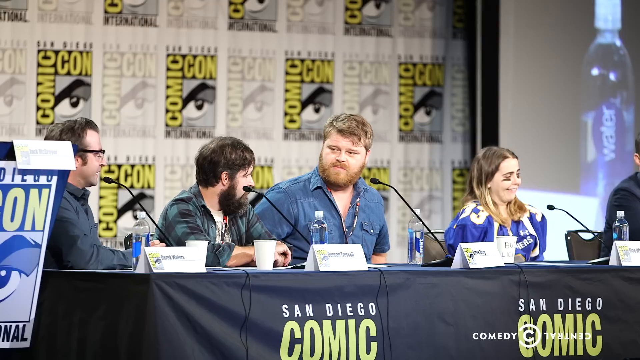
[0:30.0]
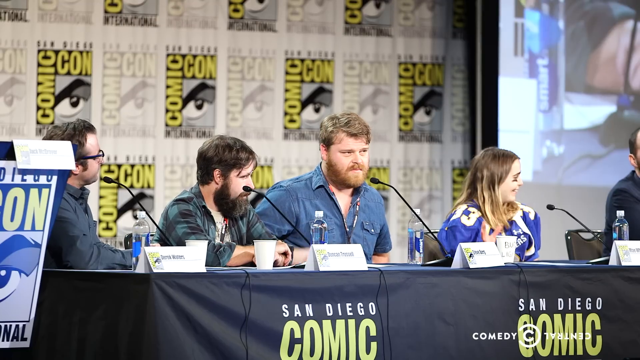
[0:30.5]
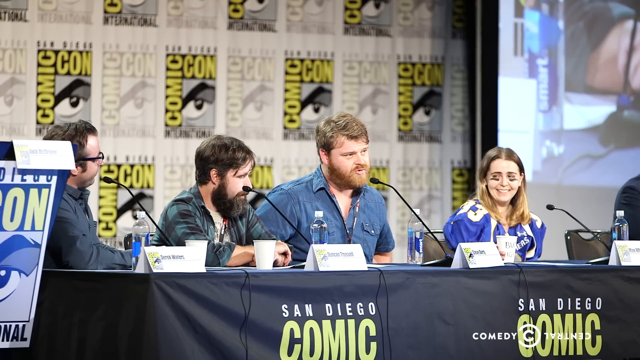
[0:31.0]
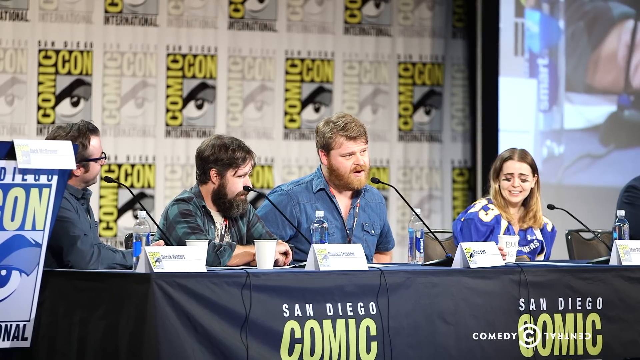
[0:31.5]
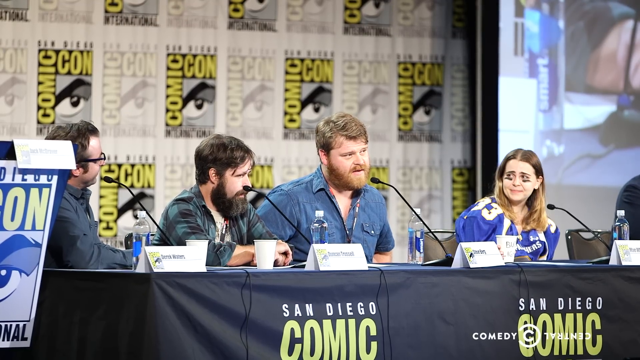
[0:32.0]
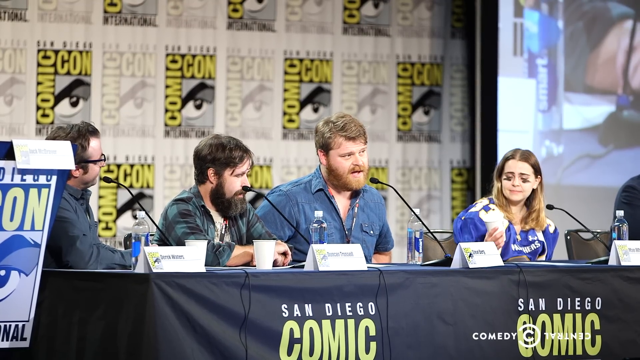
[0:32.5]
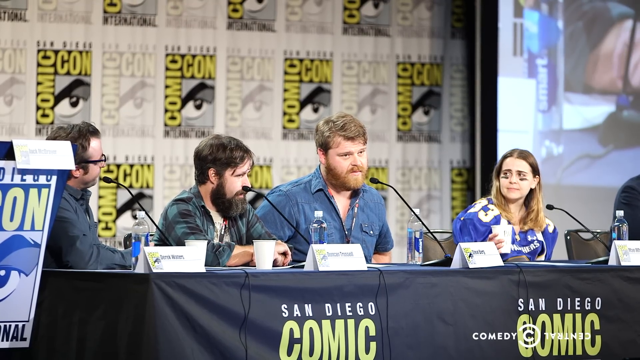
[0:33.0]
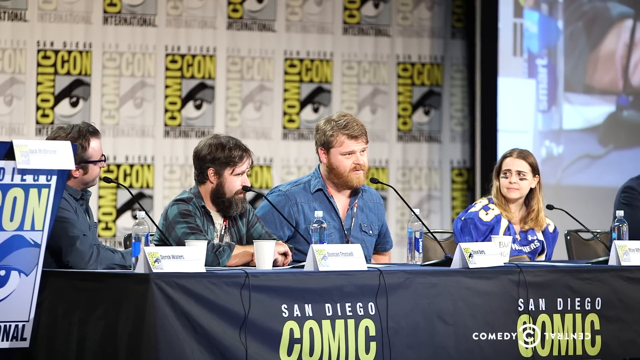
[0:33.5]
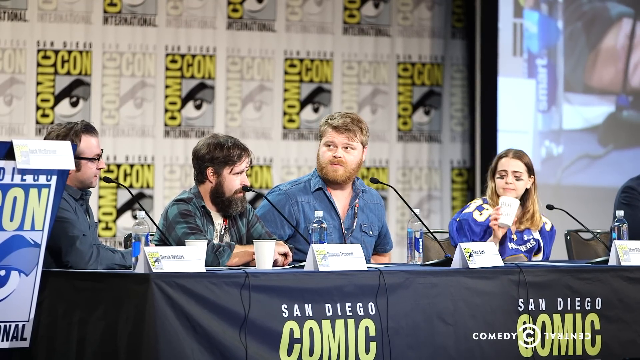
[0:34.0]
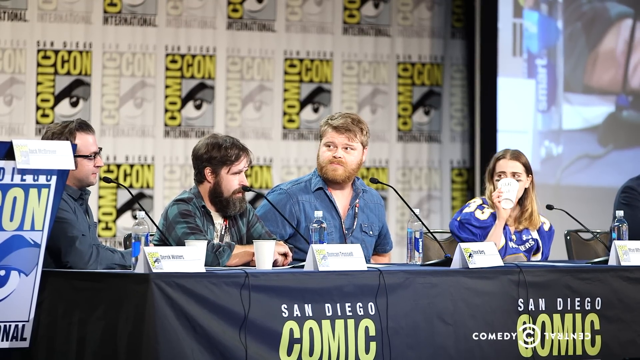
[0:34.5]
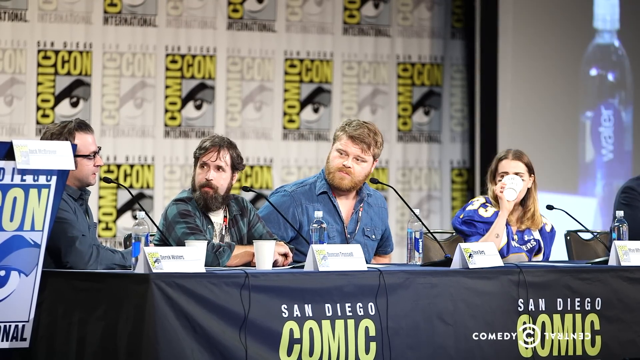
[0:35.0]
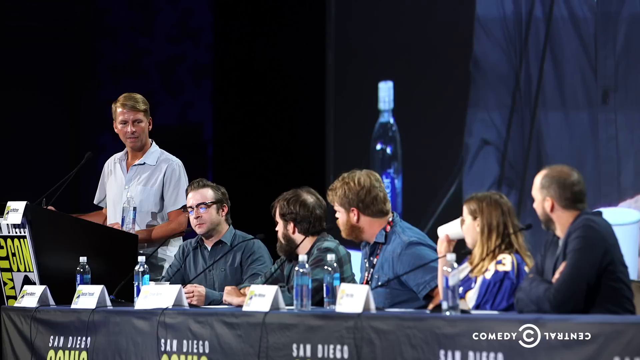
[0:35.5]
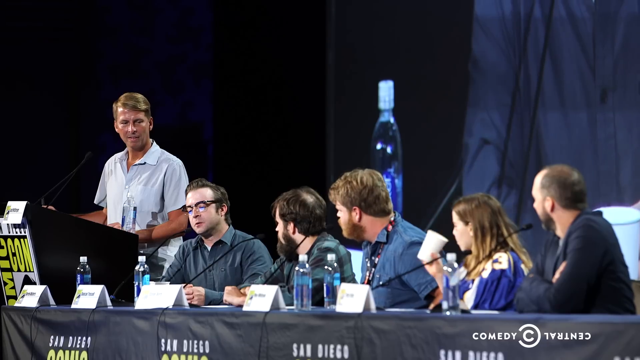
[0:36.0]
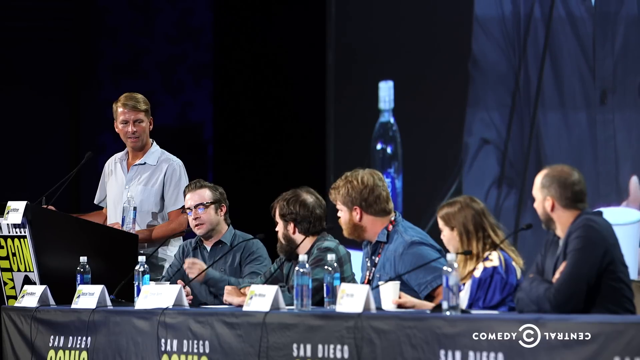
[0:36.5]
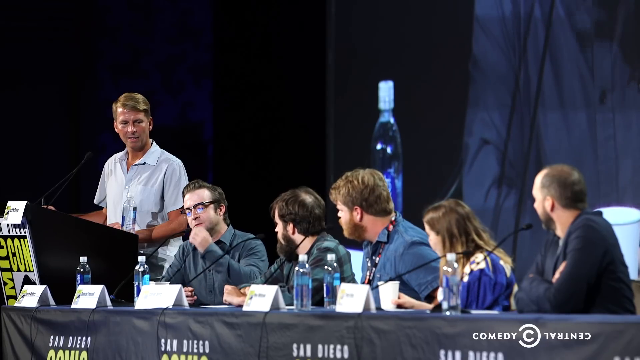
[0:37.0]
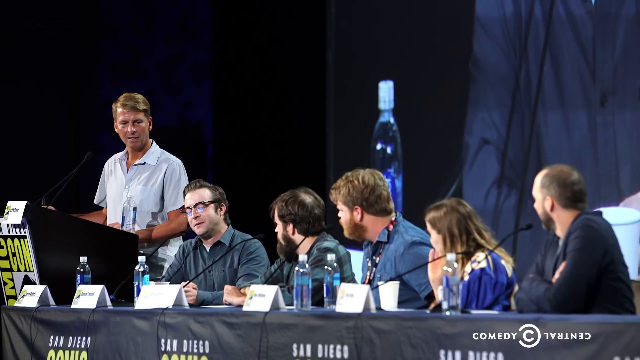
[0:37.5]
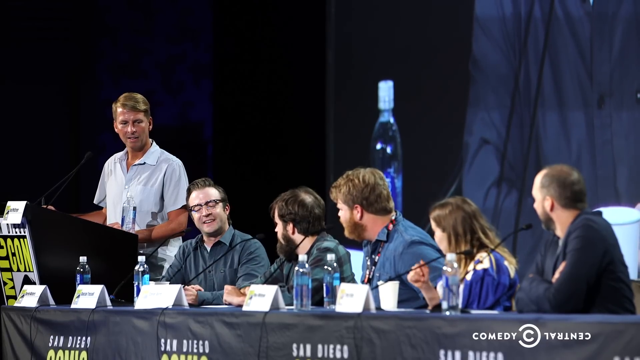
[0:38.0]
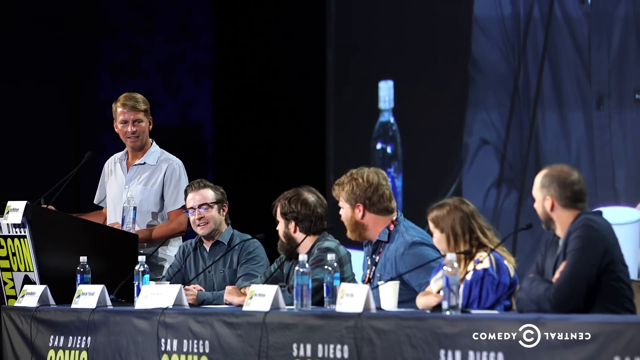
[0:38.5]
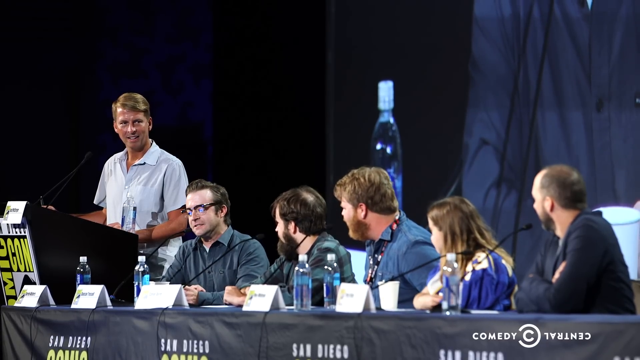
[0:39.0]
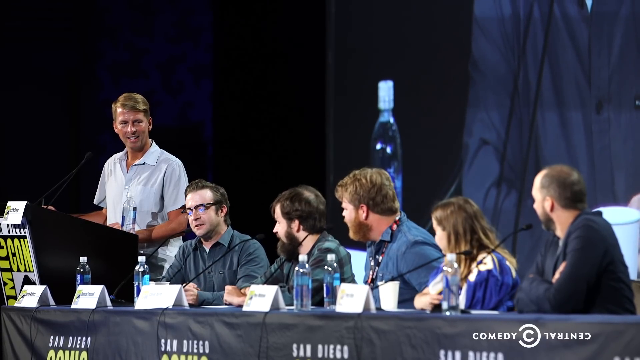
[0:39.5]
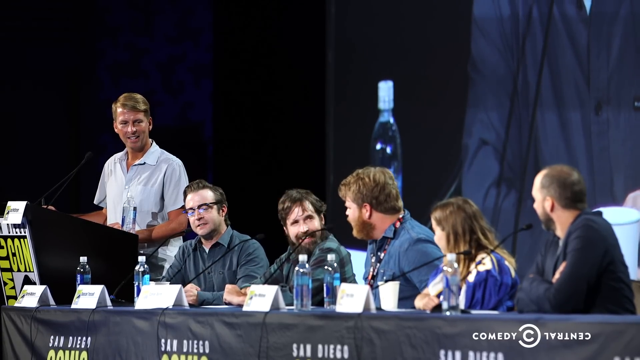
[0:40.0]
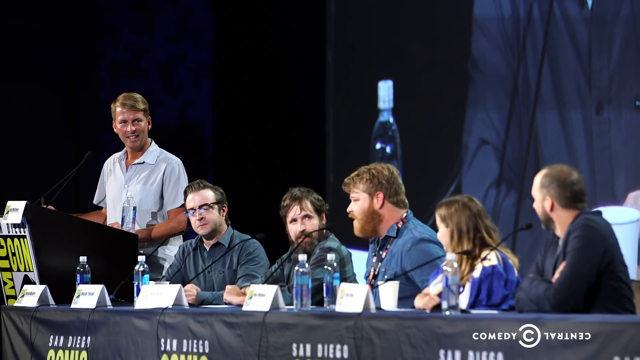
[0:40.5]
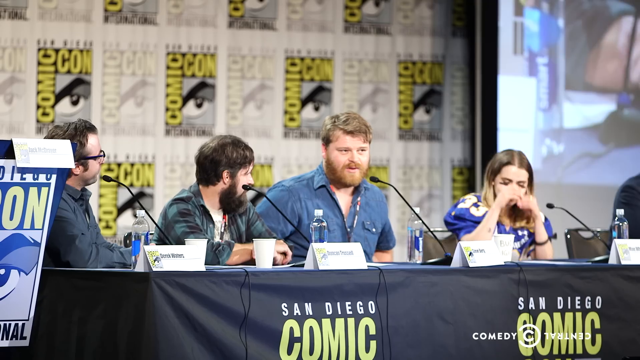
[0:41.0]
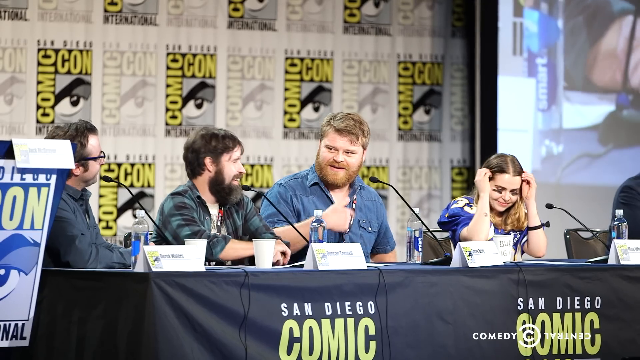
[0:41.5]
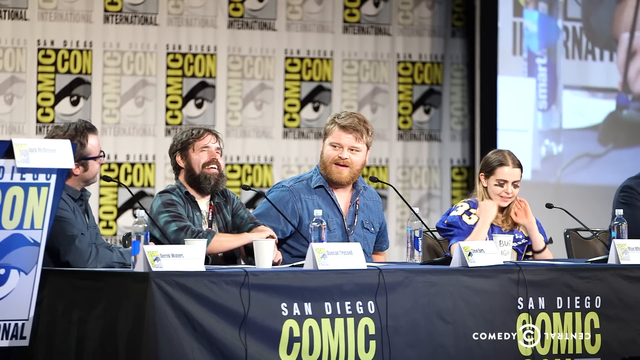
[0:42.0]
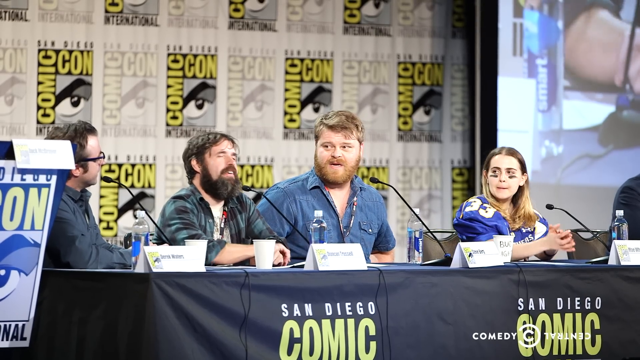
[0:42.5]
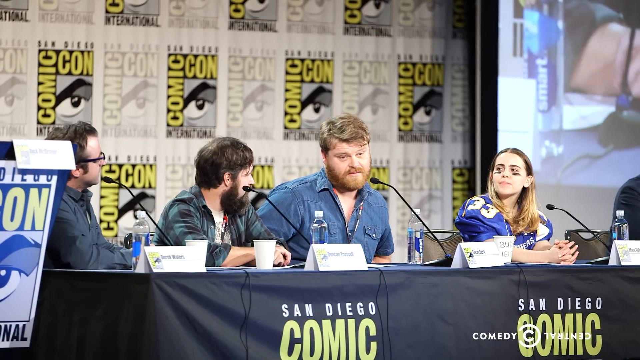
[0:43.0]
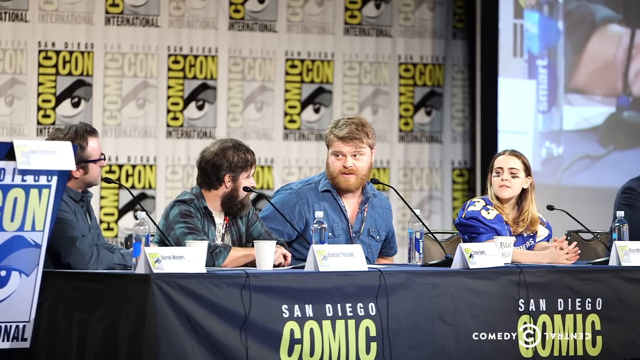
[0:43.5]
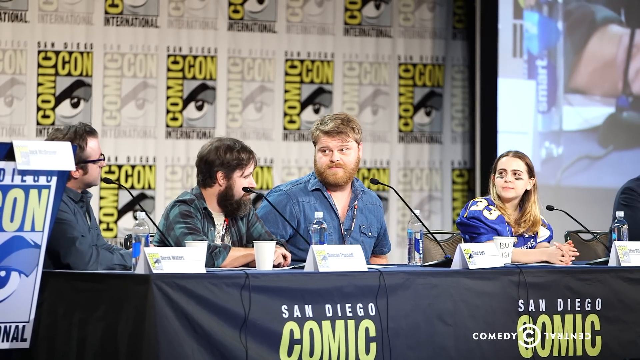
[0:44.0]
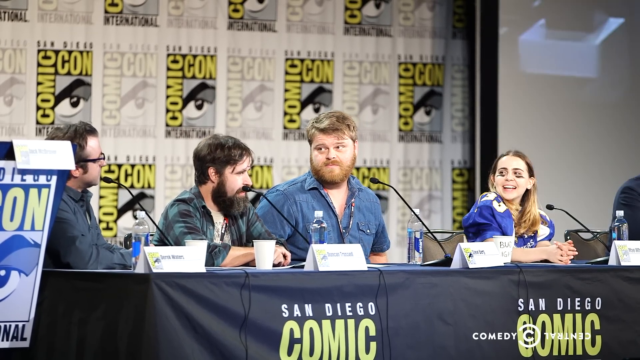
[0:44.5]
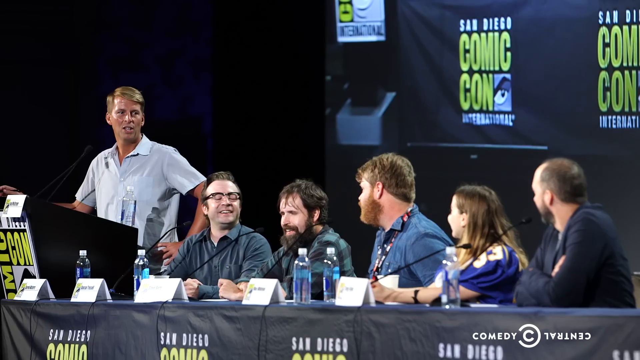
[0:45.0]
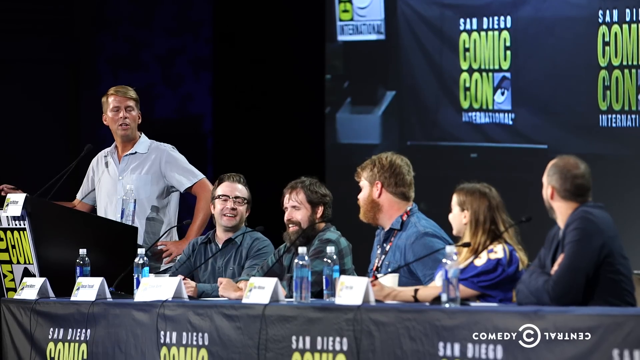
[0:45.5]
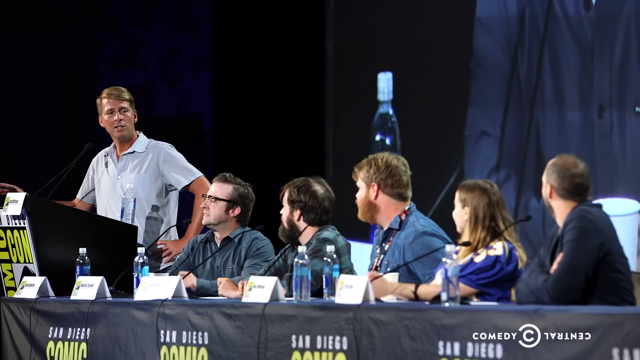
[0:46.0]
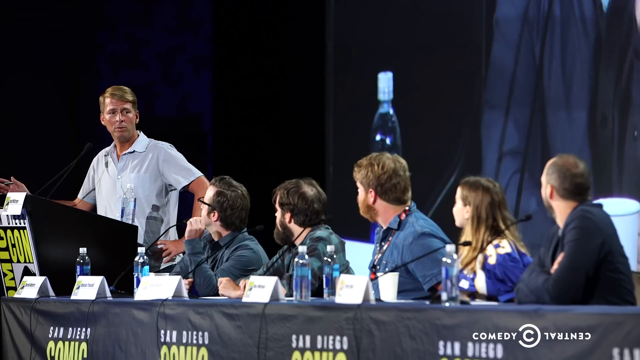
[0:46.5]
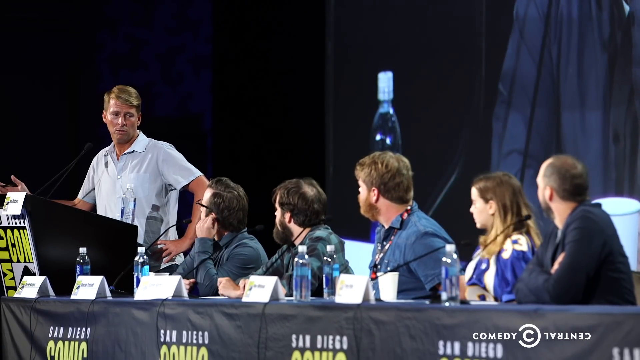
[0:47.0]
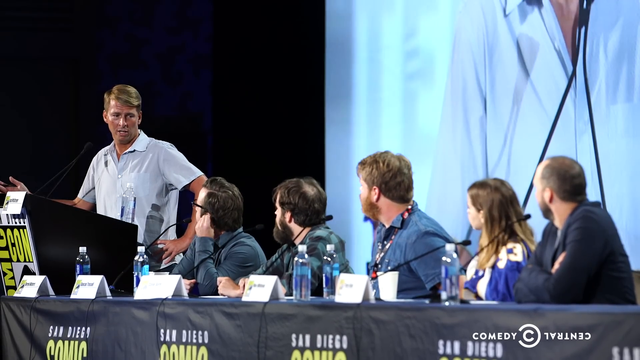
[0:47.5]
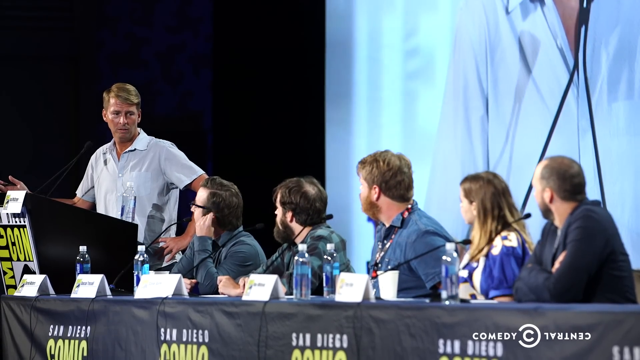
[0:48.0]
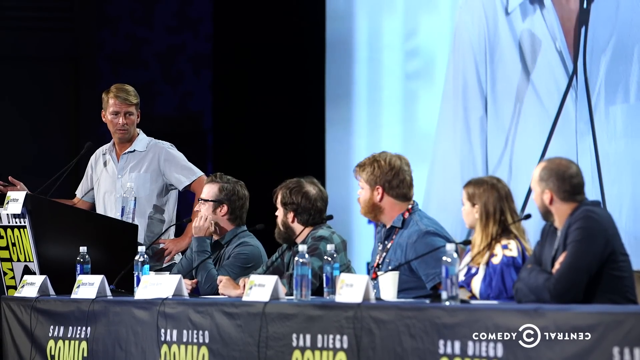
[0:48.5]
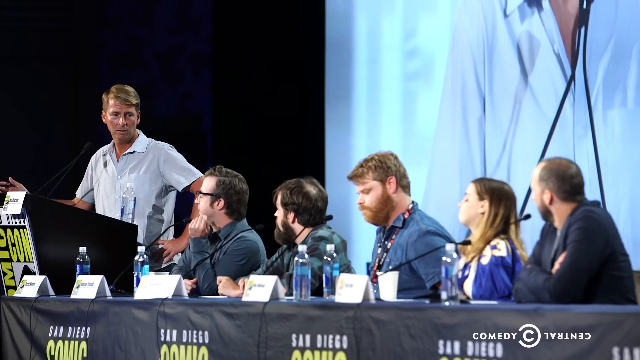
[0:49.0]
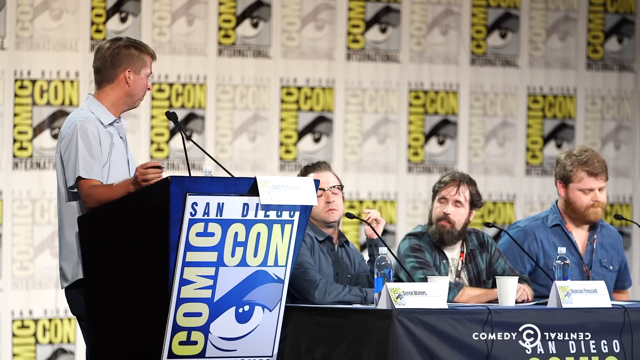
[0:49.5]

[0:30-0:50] The man in the middle is still talking. The woman looks to her right at the man, then looks back at the man in the middle who is talking. She picks up a glass cup, takes a drink and wipes off her mouth. The man at the far end on the left talks a little, they seem to laugh, and then the focus returns to the man in the middle. The man between the man on the left and the man in the middle laughs pretty hard at what he says. Kenneth is just sort of standing there observing, not really saying anything. The man on the far right end has not said anything, and the woman has barely said anything except to the man on her right. After they laugh hard, the video cuts back to Kenneth looking at them. He says something, makes a little motion with his hand and tilts his head, and they all seem to chuckle at what he said. The camera angle is from the left, angled in, so it is from the front but a little to the left; it then cuts to a front-right angle and back to a front-left angle. When the man in the middle stops talking and the shot cuts to Kenneth, it cuts far down the right side at almost a pretty sharp angle. The man on the right side is often cut off when the camera pans over to the left side angled in, and so is Kenneth; only the three men on the left side and the woman are really visible. In that shot, a video can be seen playing in the background behind the people.